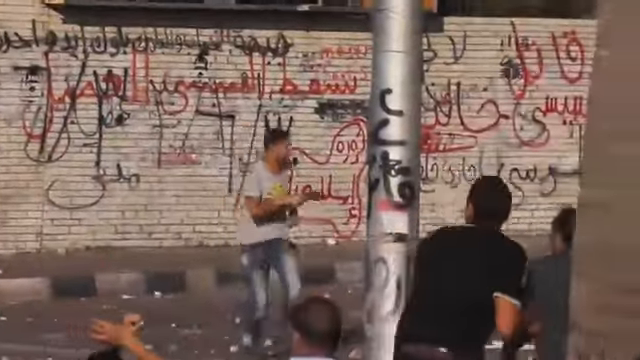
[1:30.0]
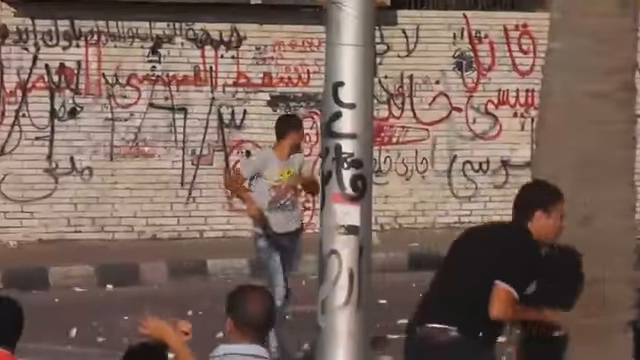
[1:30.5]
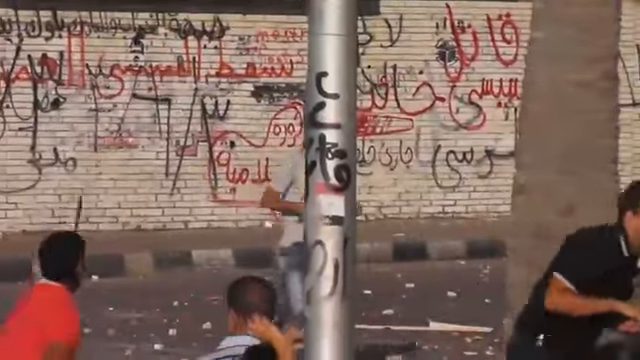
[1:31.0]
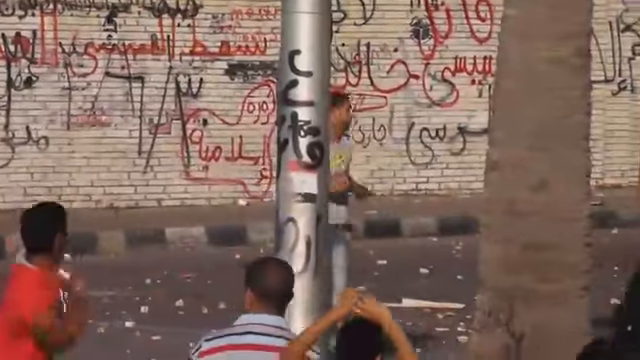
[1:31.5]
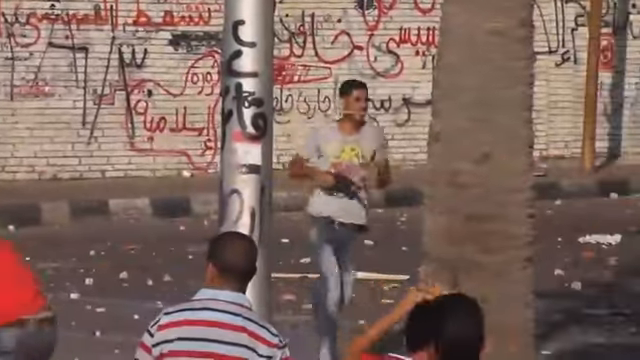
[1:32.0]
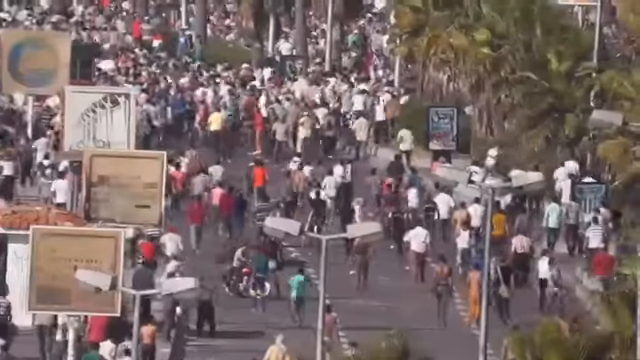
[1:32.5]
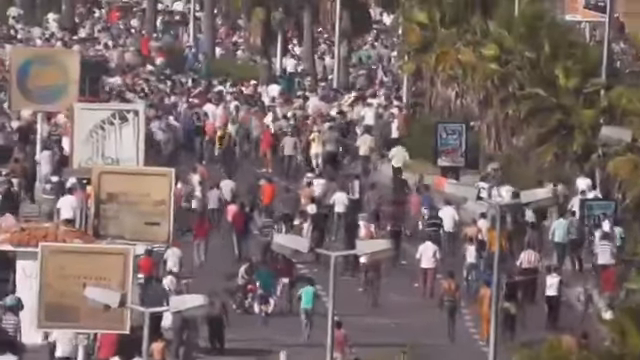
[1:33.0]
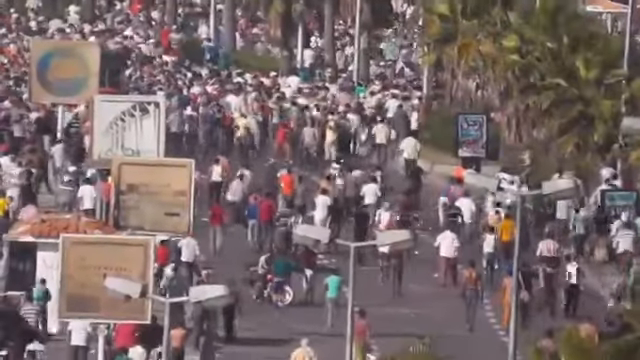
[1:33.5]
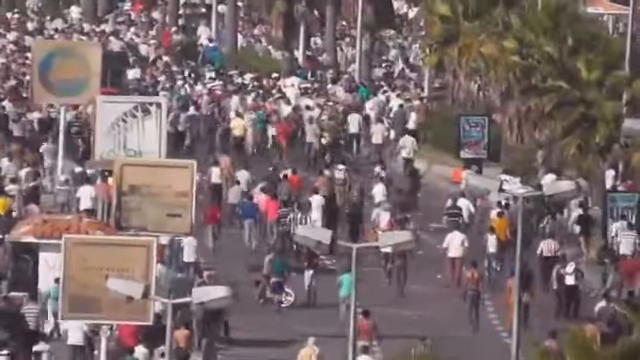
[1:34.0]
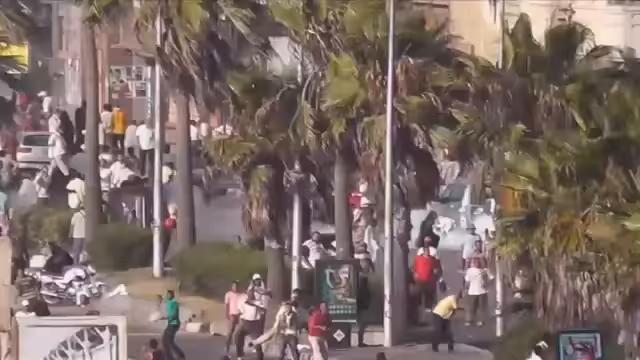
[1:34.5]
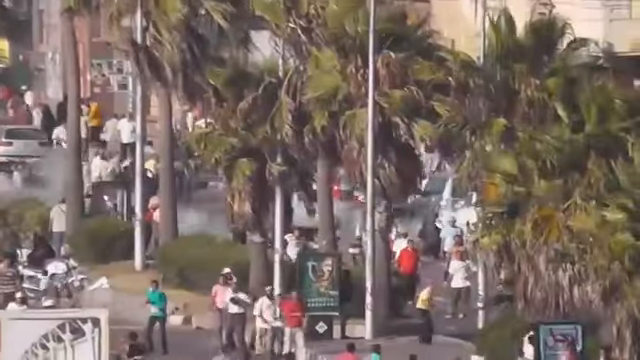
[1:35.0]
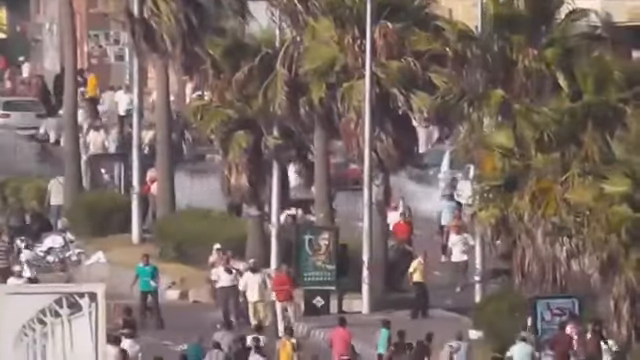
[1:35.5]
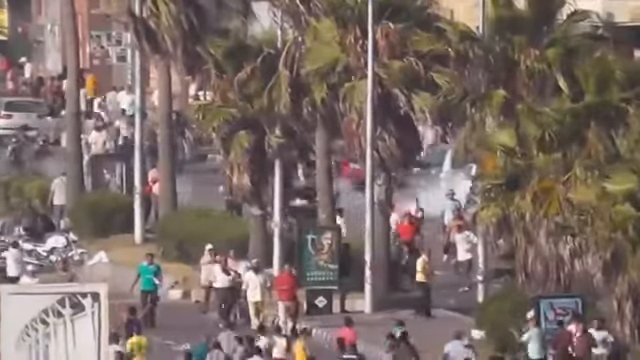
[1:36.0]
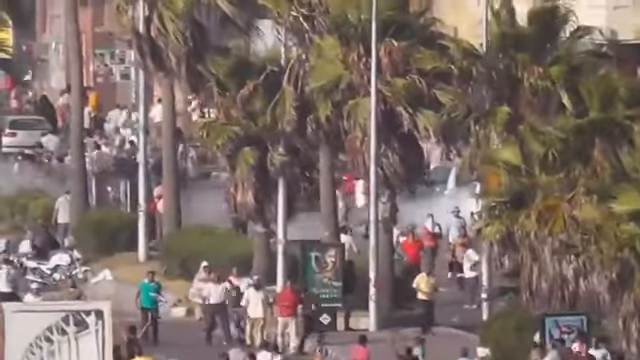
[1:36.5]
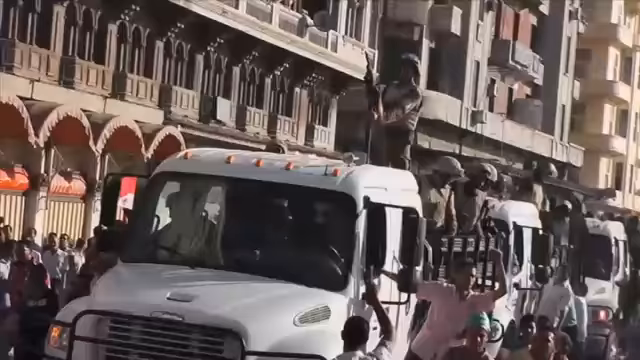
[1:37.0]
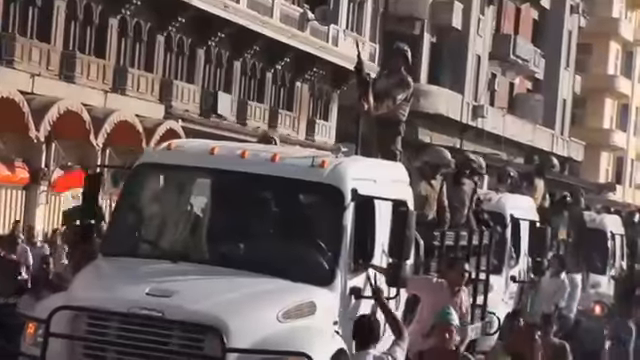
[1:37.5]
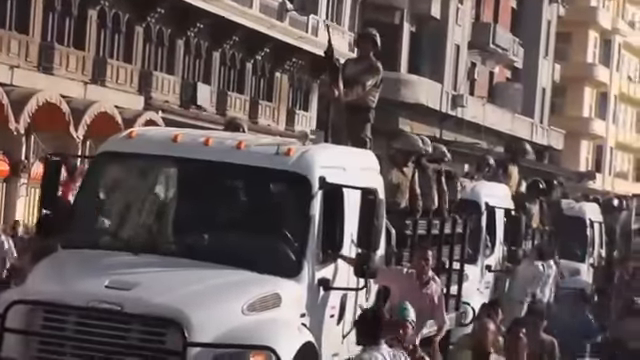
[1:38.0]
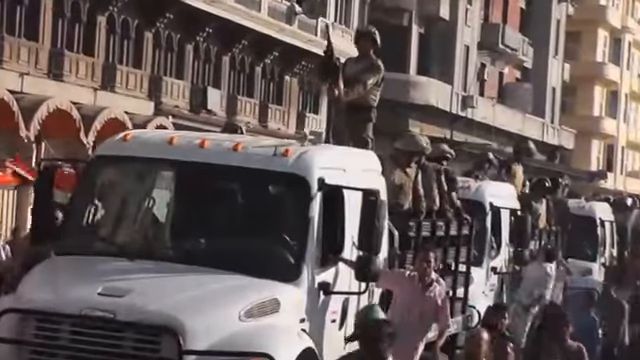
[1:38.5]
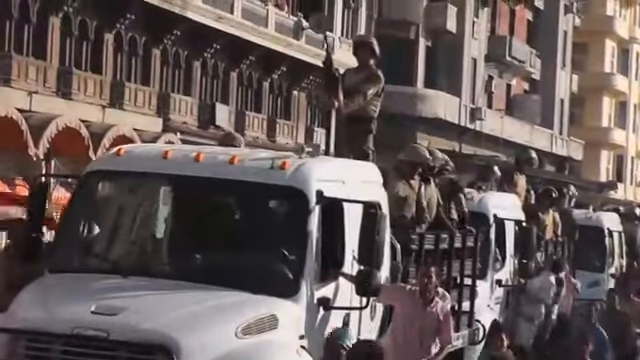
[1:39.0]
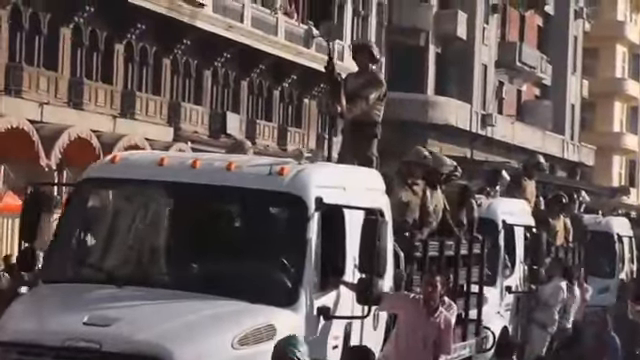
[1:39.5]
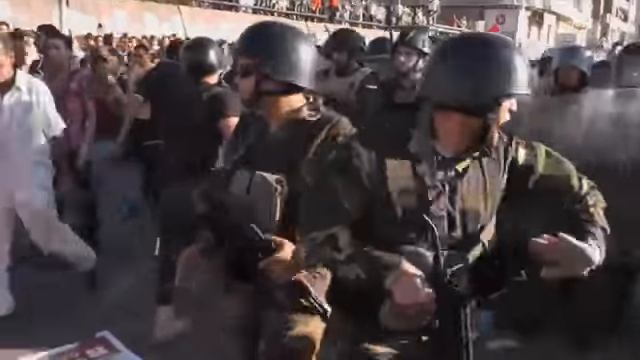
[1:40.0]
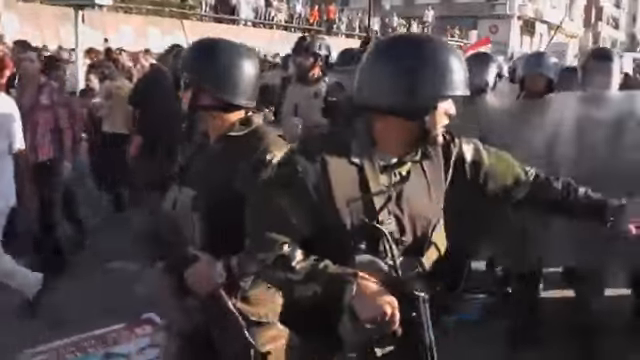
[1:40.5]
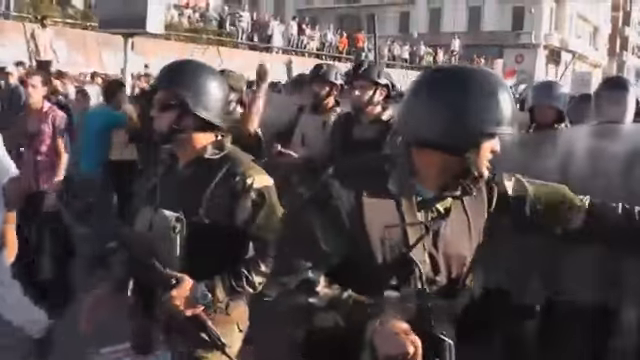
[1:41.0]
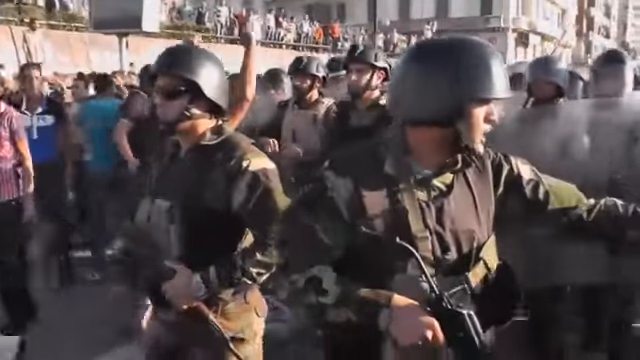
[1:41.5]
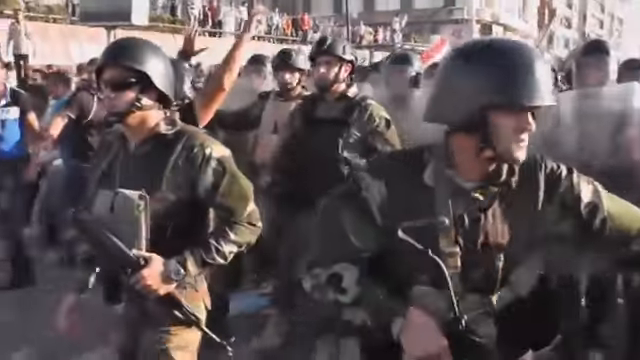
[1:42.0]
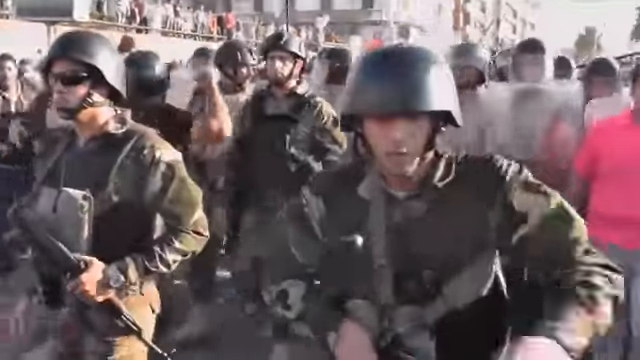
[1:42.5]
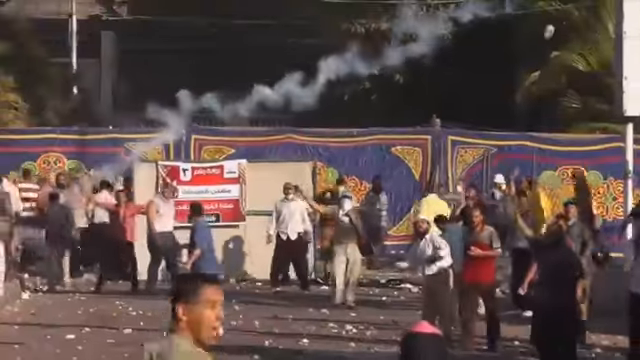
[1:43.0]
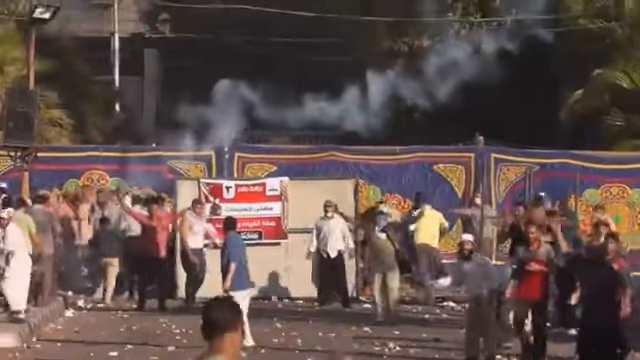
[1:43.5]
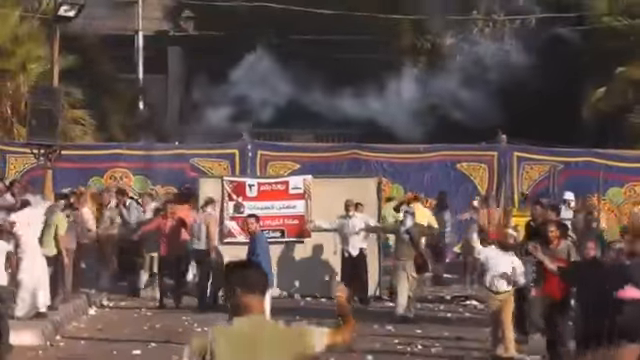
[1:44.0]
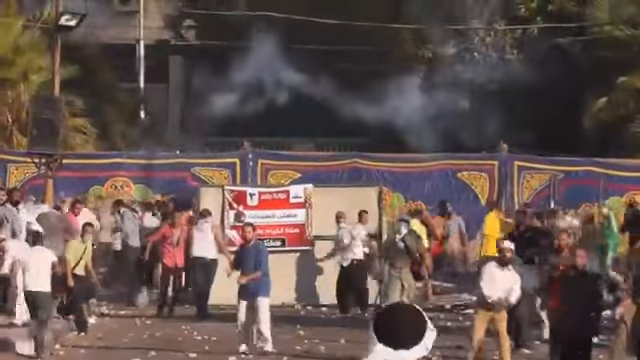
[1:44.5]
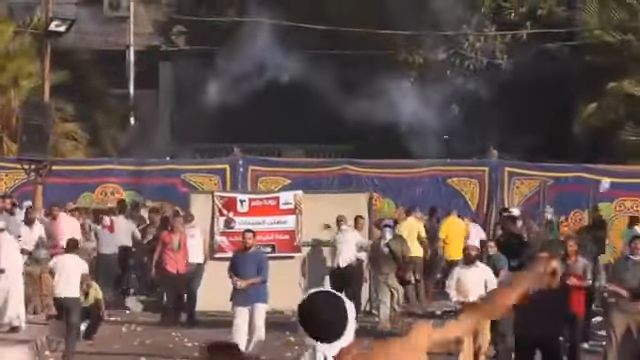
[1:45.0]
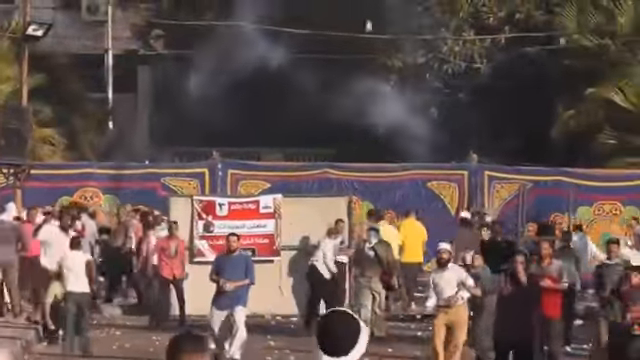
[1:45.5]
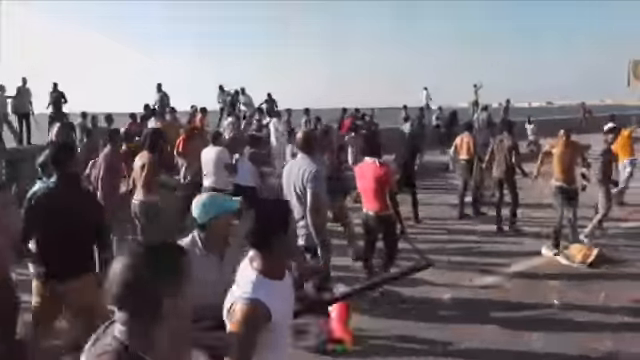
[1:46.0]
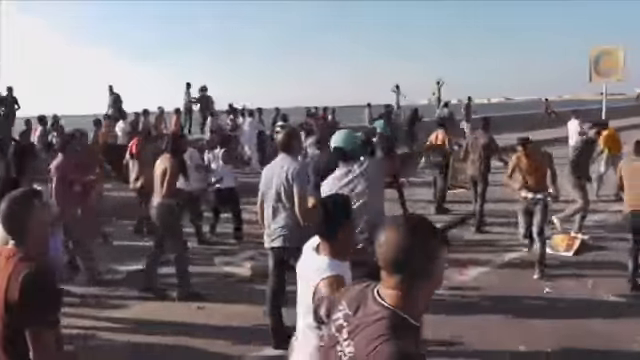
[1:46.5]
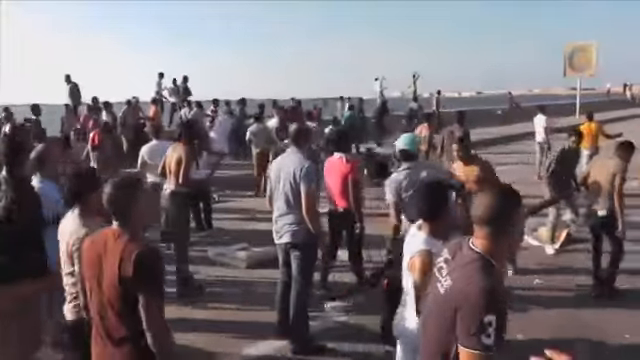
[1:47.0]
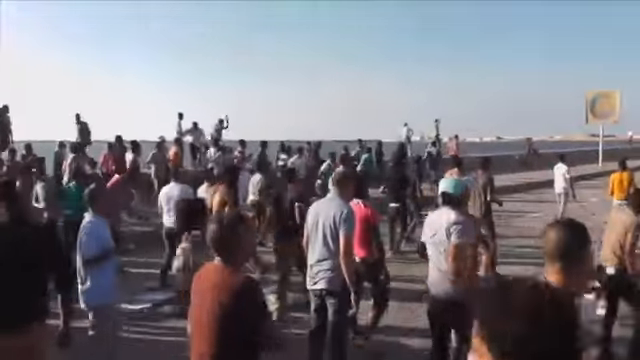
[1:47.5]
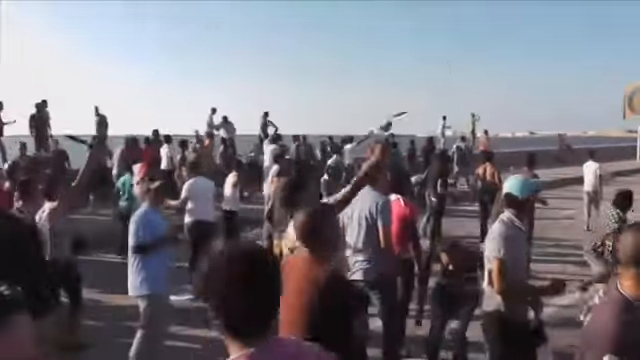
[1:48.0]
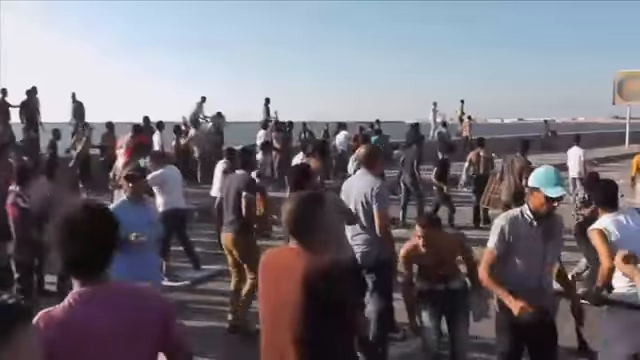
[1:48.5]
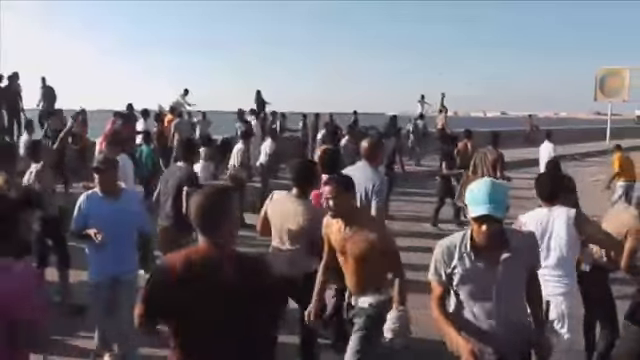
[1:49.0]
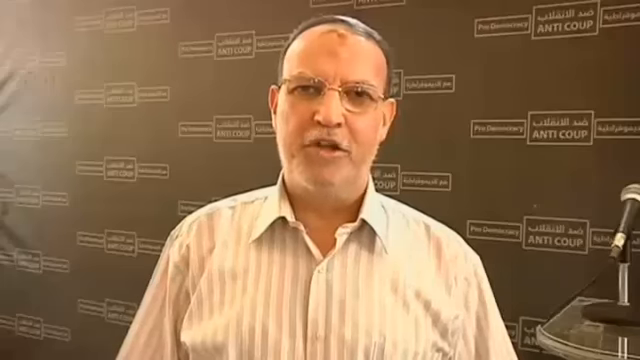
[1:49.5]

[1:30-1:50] The young man with the gun is still present, while others carry cutlasses and machetes and throw objects. The scene appears chaotic. Security personnel are now present in what seems to be a military intervention. Civilians throw stones and other objects. A man on screen appears to be reporting on the incident. The streets are flooded with people engaged in angry fighting, some carrying cutlasses, guns and sticks, and throwing objects.